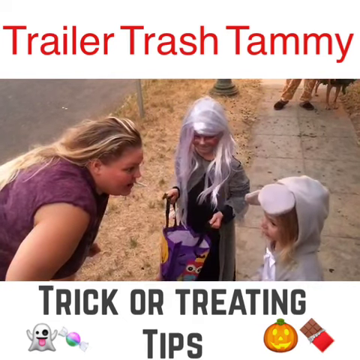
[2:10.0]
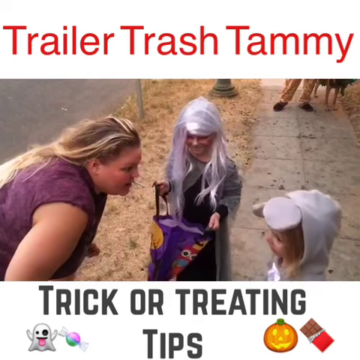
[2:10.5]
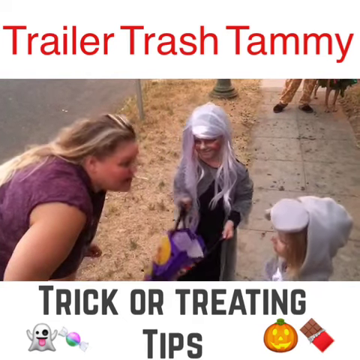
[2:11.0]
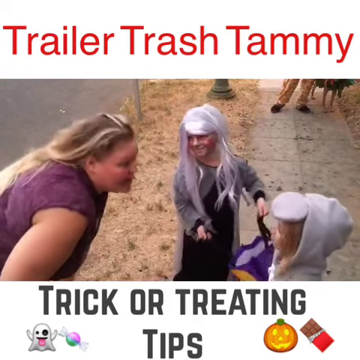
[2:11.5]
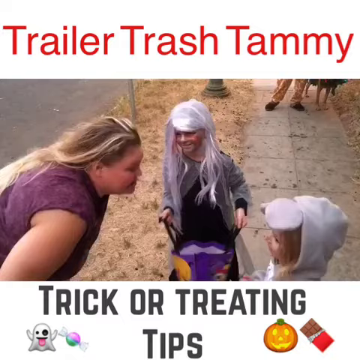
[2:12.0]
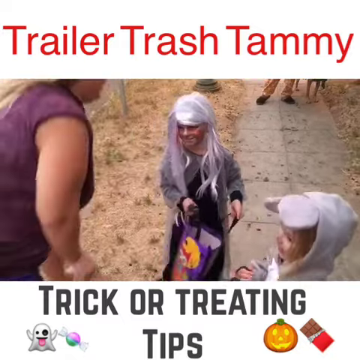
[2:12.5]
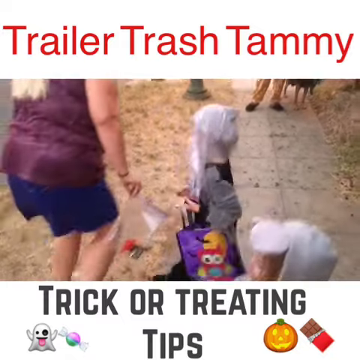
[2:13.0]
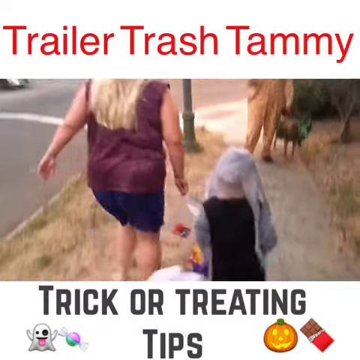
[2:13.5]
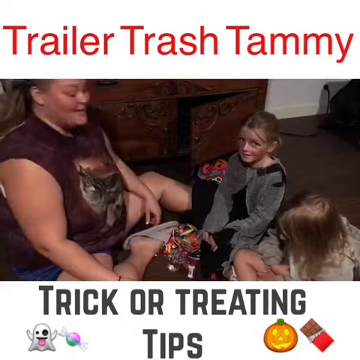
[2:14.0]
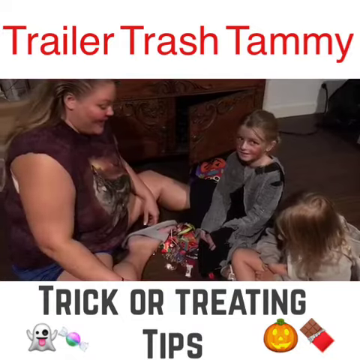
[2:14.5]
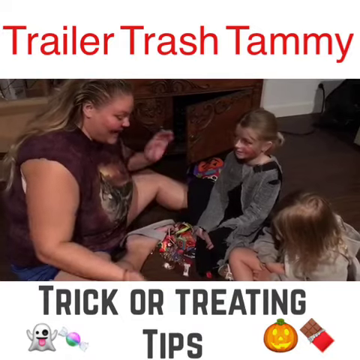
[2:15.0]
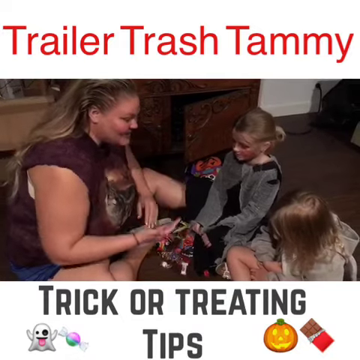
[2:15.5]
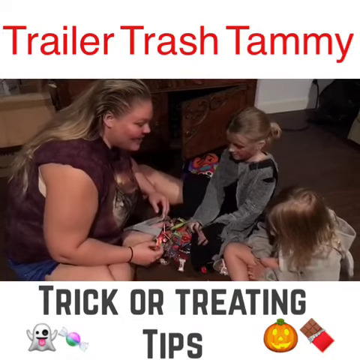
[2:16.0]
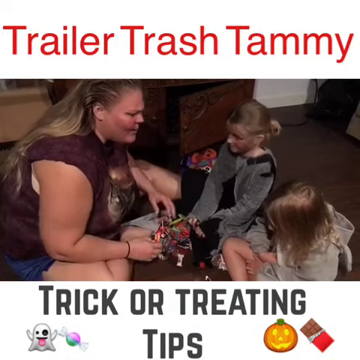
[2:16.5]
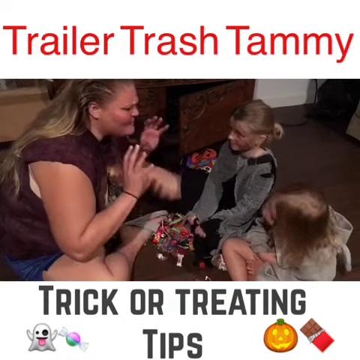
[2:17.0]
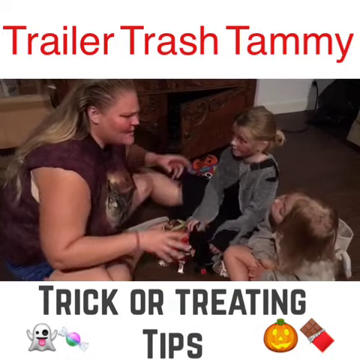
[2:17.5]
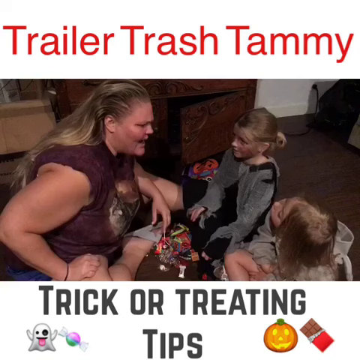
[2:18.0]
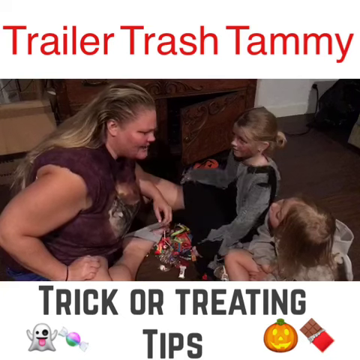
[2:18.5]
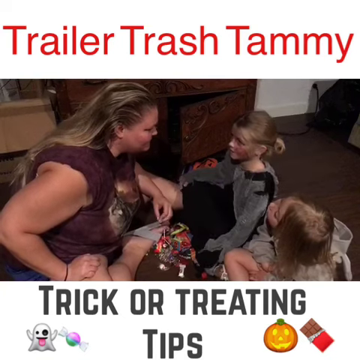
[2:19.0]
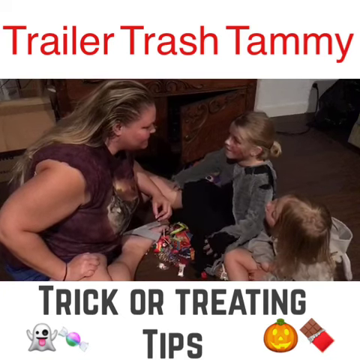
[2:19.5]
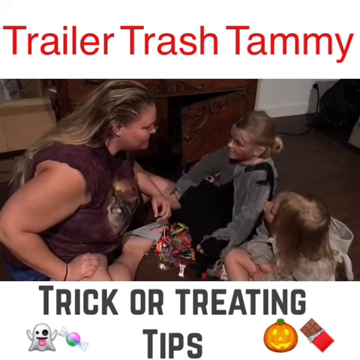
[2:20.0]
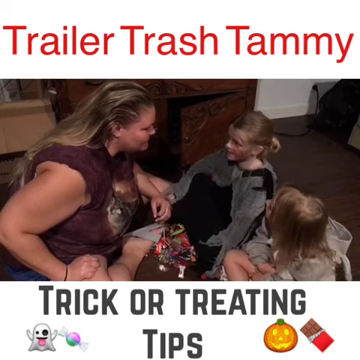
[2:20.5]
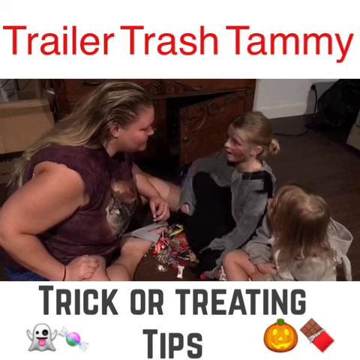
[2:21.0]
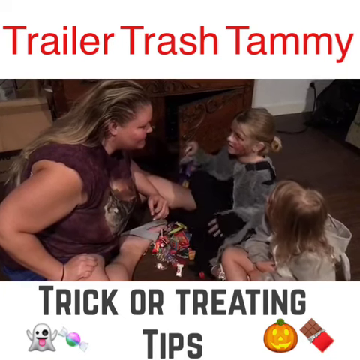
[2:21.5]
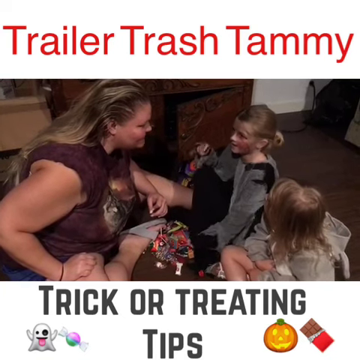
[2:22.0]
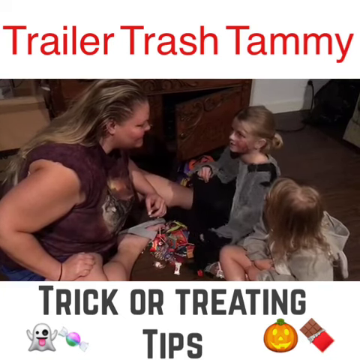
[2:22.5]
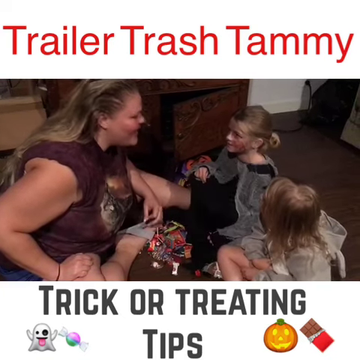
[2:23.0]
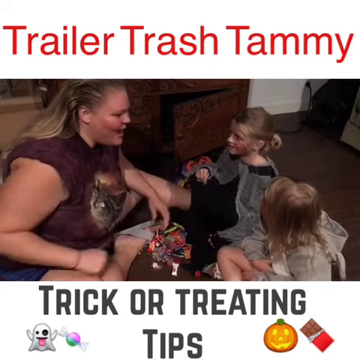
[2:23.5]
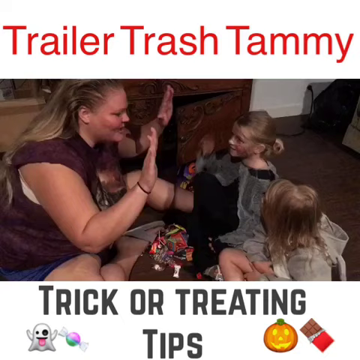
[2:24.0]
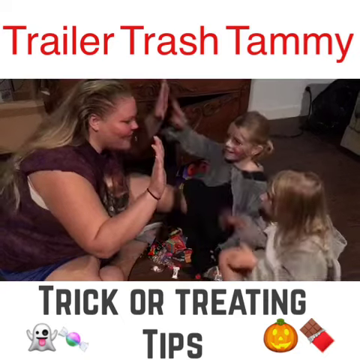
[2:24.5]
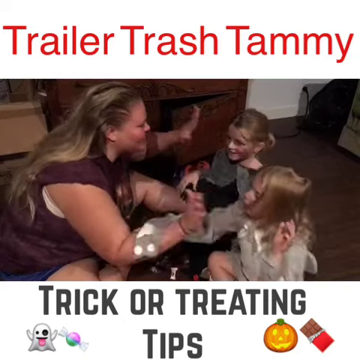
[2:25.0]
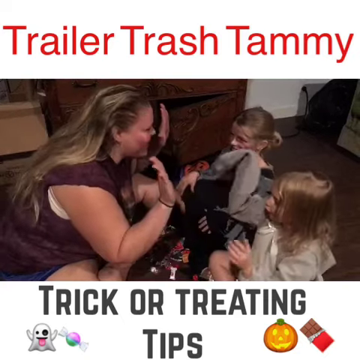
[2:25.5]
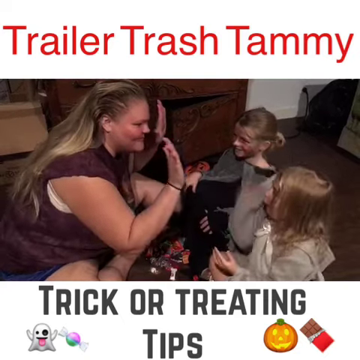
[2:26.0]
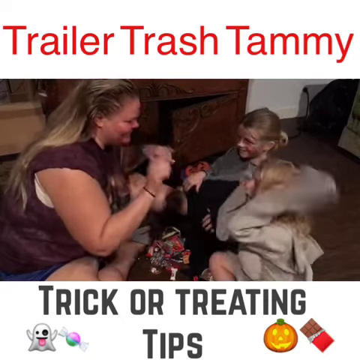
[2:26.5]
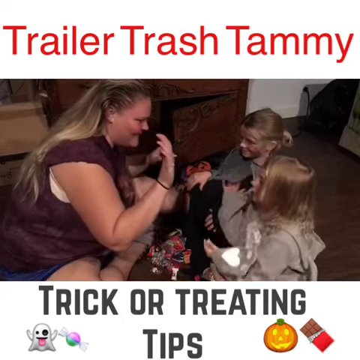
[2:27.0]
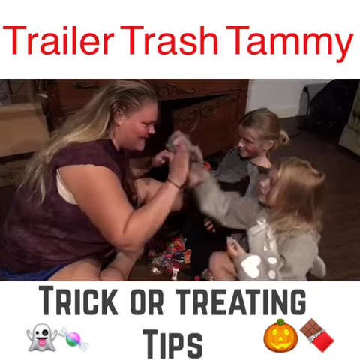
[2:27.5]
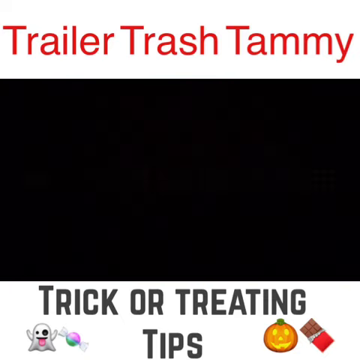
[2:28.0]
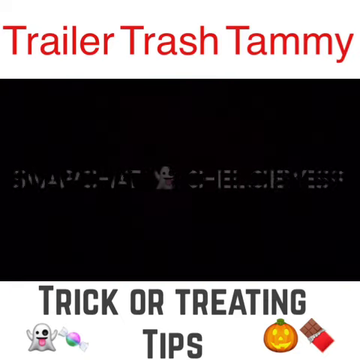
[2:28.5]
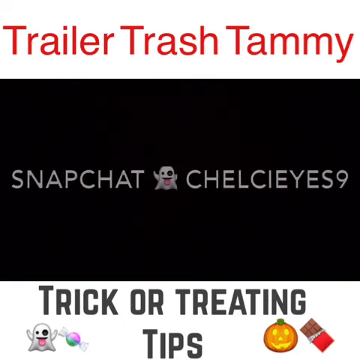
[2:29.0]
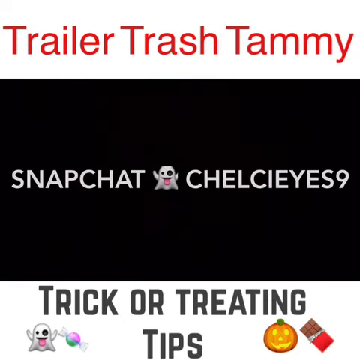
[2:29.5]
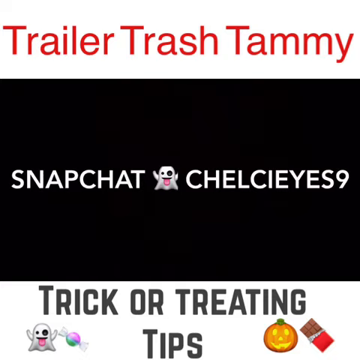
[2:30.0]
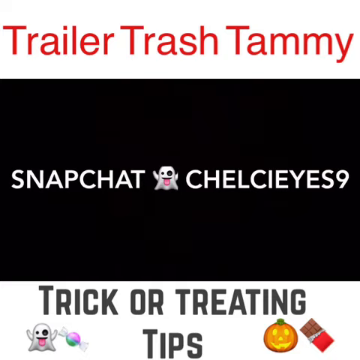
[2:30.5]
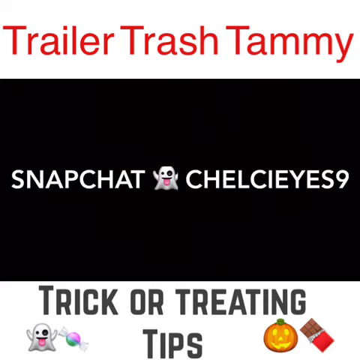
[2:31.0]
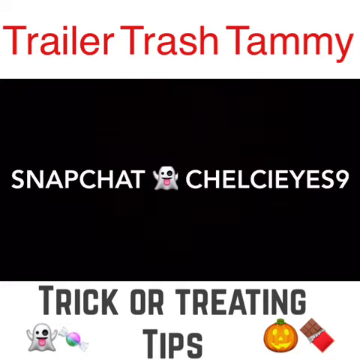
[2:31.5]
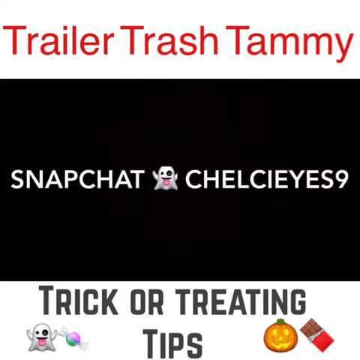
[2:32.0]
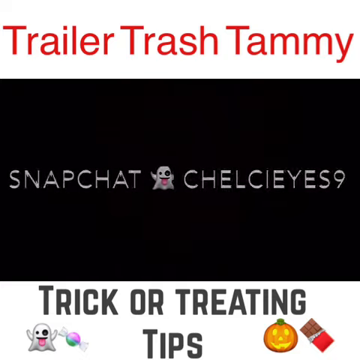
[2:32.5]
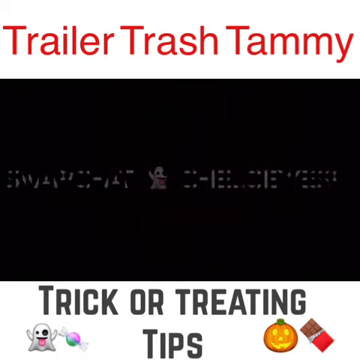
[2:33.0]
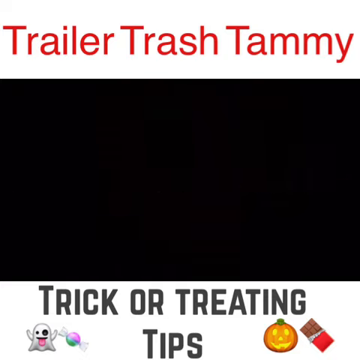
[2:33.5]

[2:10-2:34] Other trick-or-treaters walk down the sidewalk. The grass is brown, and it is daylight. Trailer Trash Tammy is bent over talking to the little girl in the mouse costume, and the little ghoul stands next to her, smiling and holding his bag of treats. Tammy continues talking to the children, giving them instructions. The video then changes to Tammy sitting on the floor inside her home with her children, who are both little girls. They high-five each other, look happy, and appear to be getting ready to sort through the candy they gathered trick-or-treating.